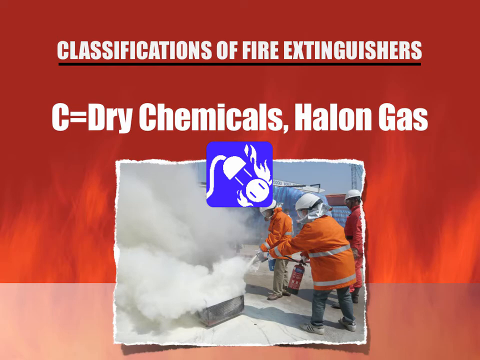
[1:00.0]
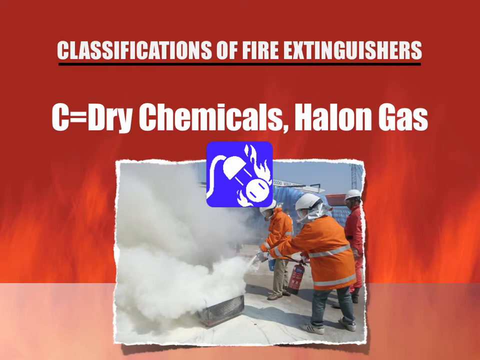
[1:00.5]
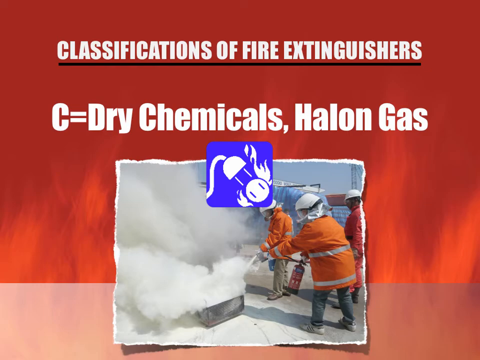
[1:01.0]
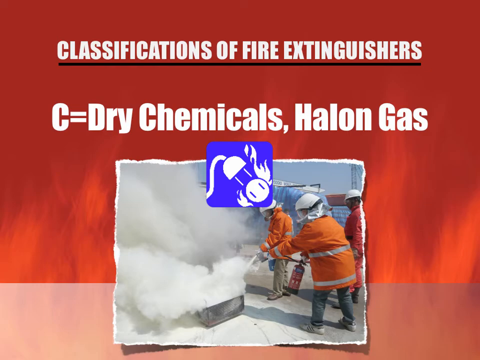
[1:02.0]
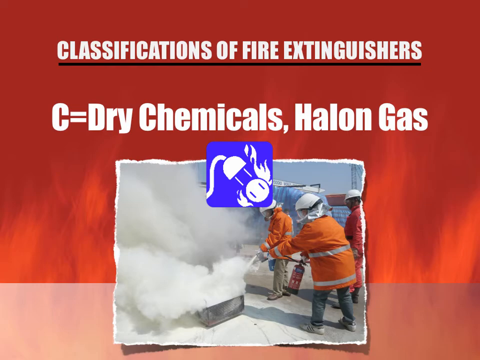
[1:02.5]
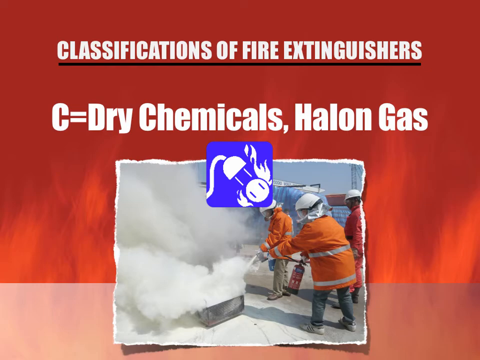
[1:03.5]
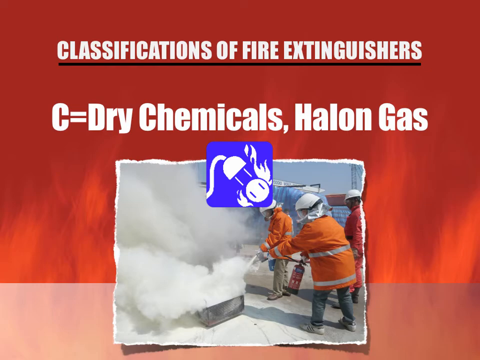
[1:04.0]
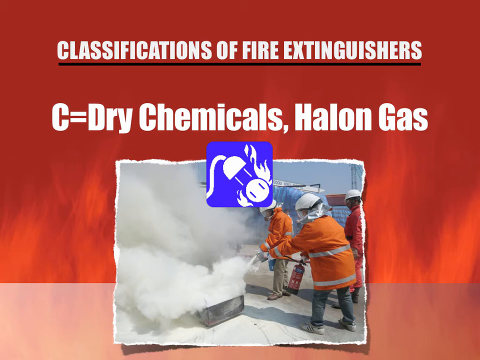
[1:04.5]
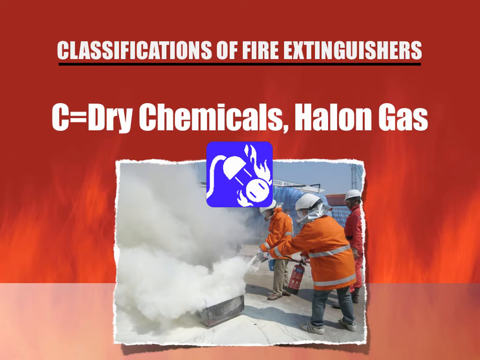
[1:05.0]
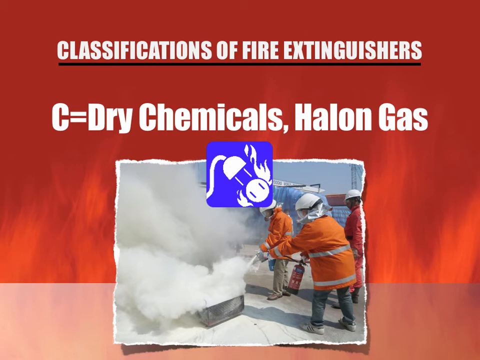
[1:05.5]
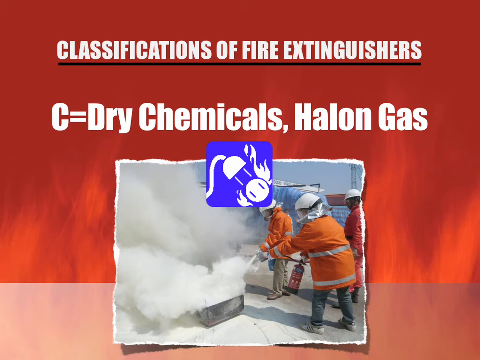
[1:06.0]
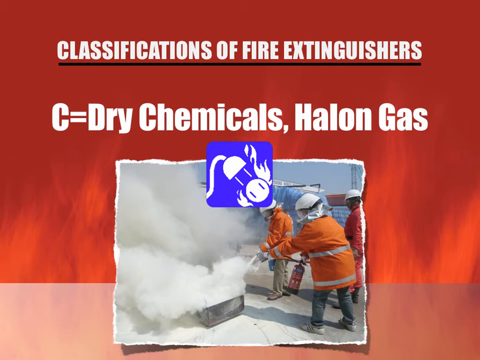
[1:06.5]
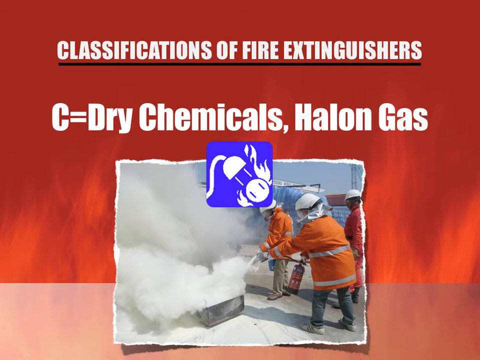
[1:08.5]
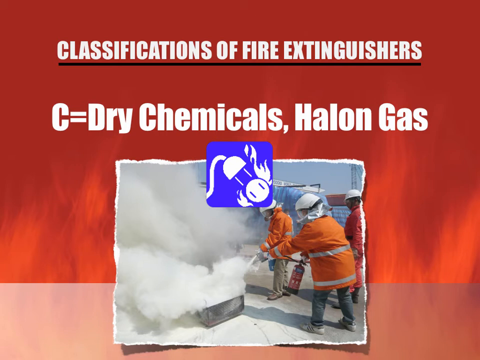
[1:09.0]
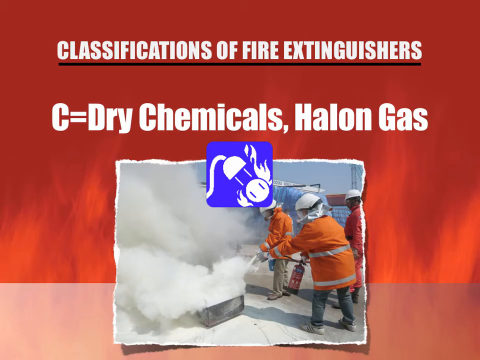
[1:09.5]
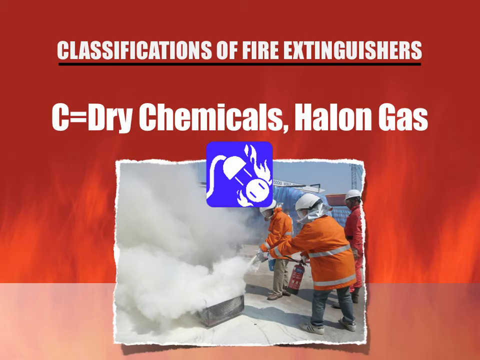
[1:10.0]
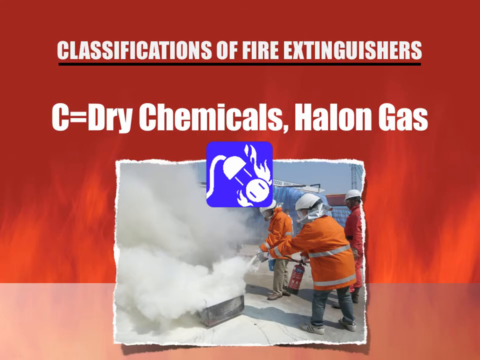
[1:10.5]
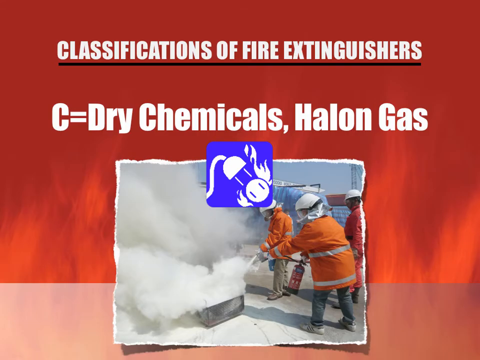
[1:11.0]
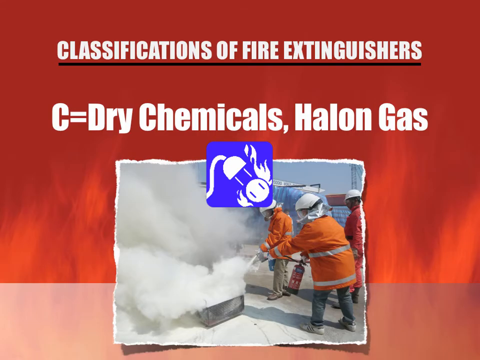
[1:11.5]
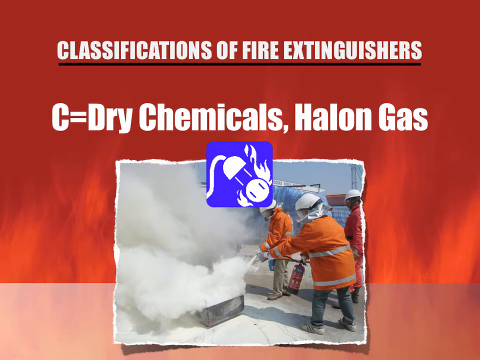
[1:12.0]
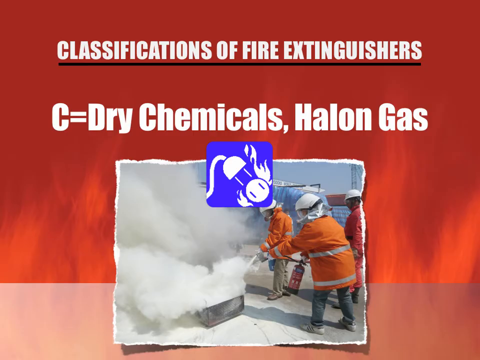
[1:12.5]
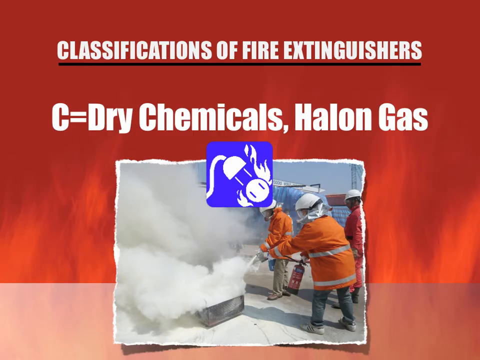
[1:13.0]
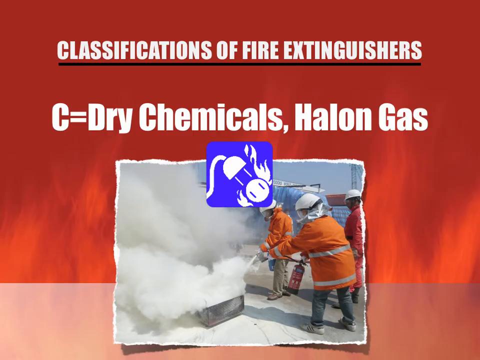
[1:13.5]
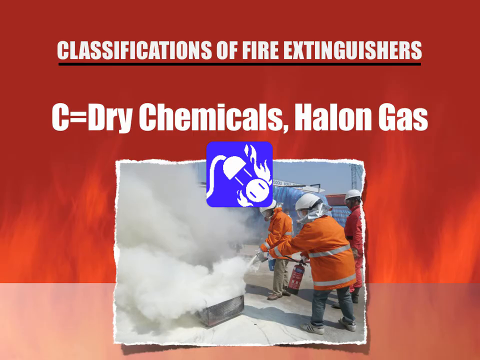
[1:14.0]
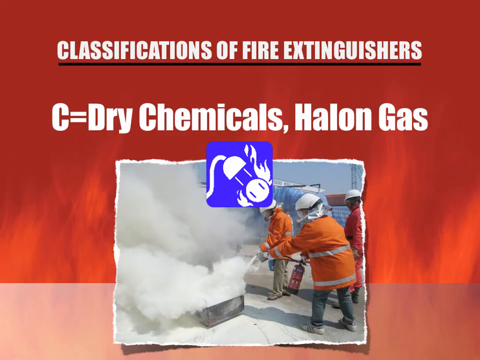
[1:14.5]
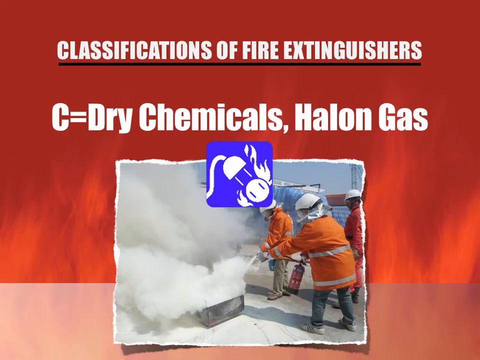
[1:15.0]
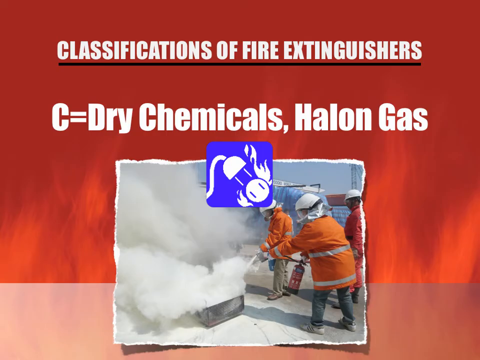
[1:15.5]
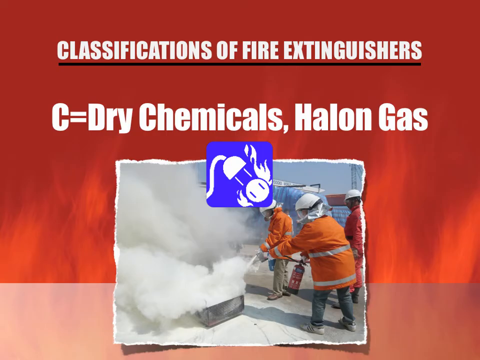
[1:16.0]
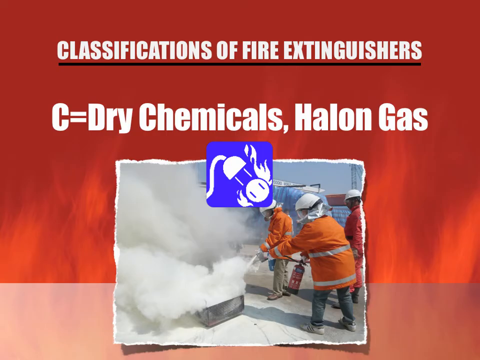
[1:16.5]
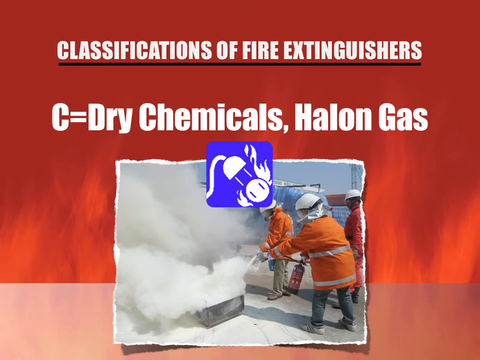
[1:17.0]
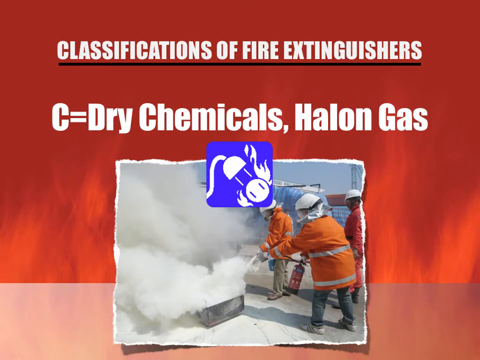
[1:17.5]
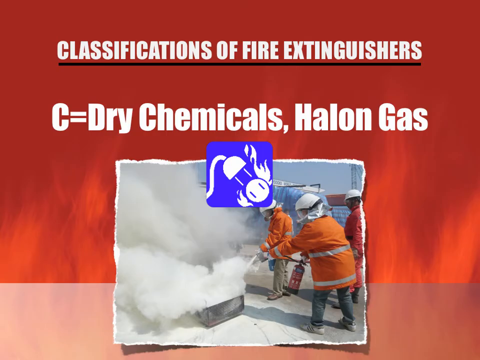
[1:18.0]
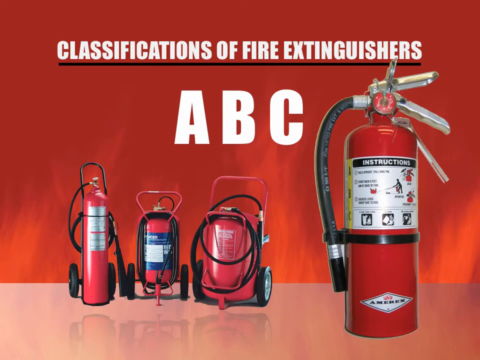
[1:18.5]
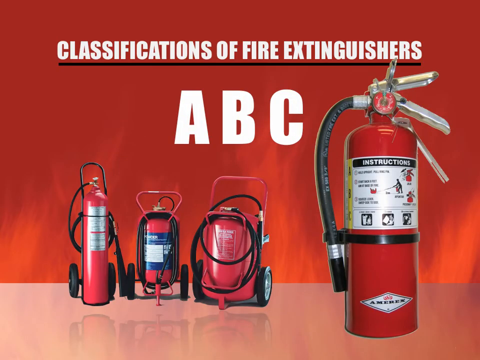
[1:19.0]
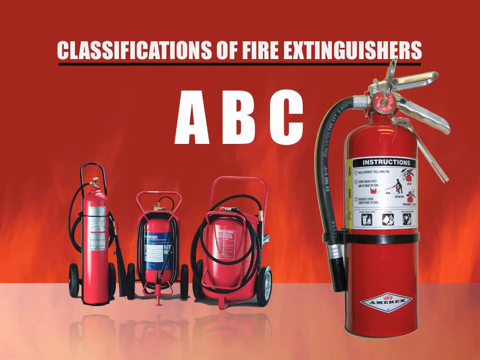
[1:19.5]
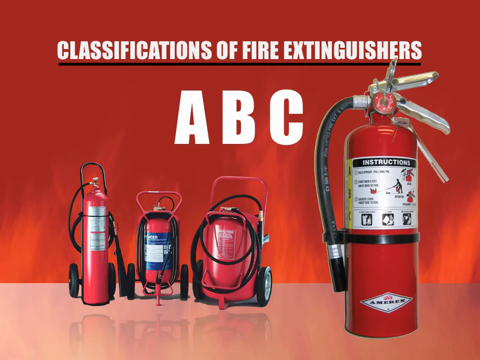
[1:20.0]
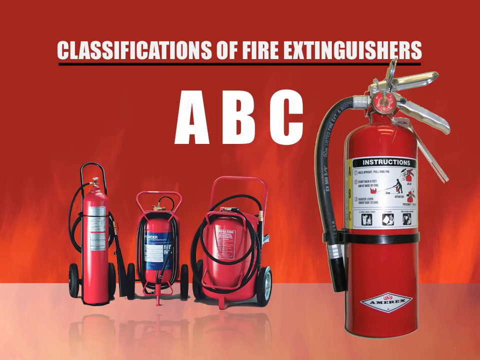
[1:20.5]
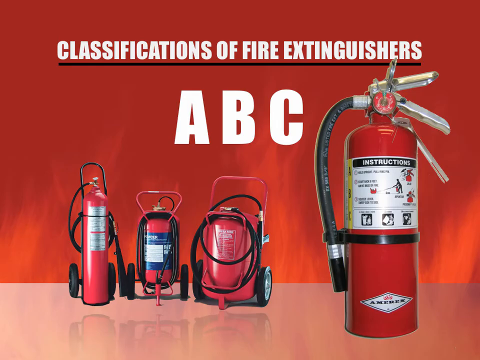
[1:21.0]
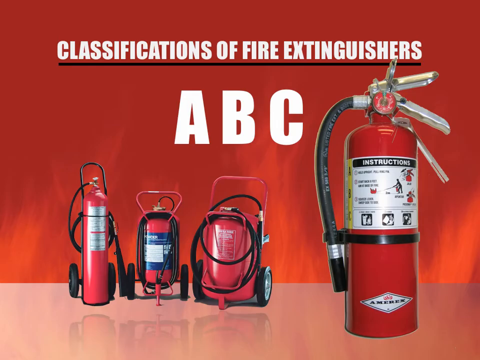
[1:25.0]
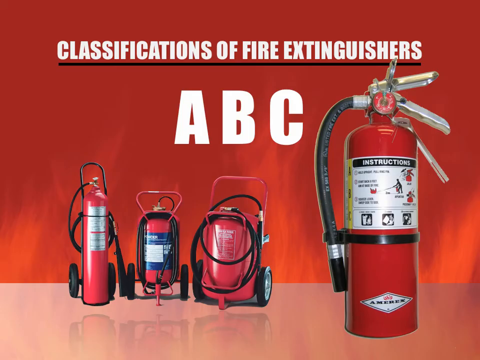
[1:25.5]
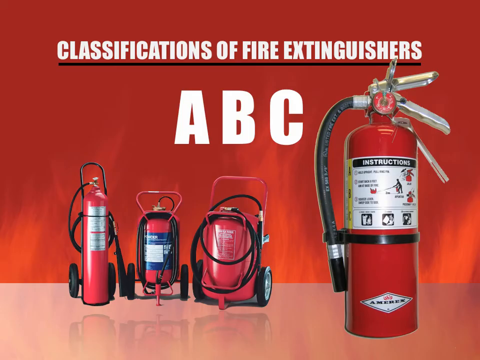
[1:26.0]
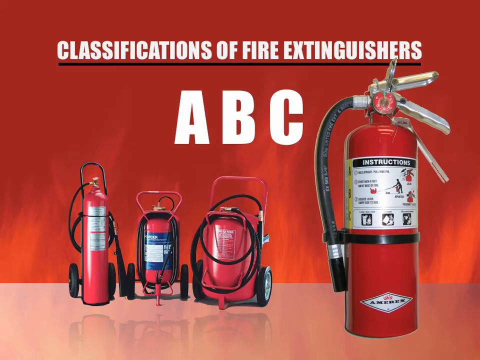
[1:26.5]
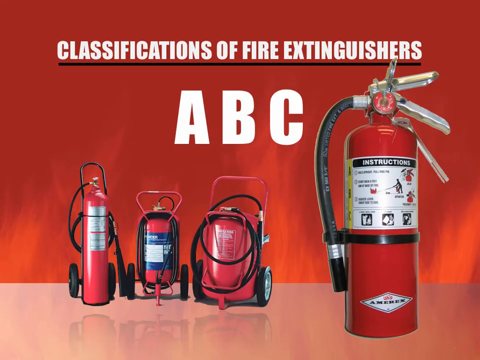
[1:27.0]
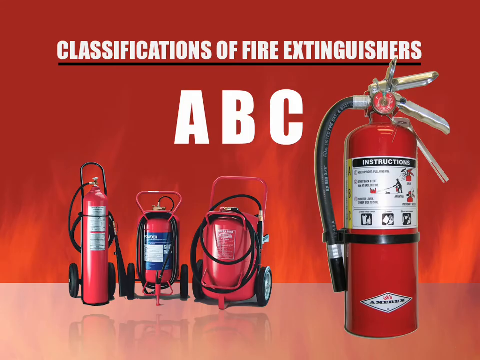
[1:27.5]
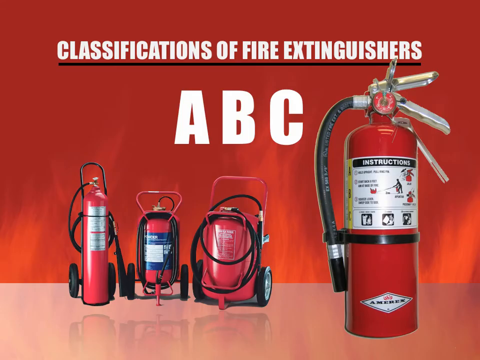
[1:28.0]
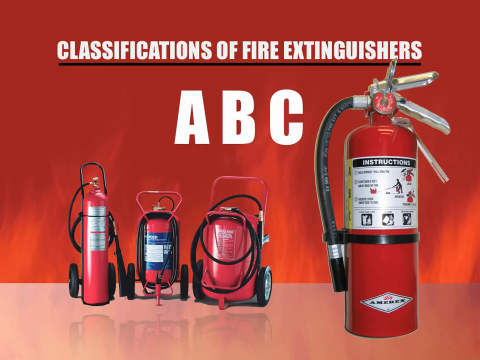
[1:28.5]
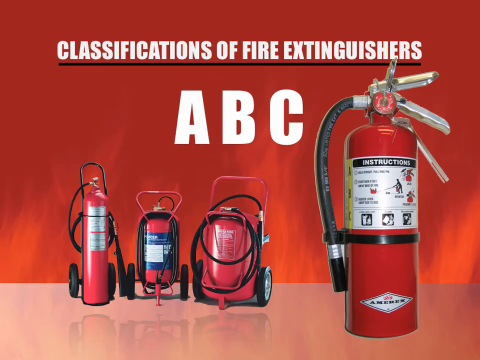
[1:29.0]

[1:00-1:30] Ordinary combustibles are listed: paper, wood, charcoal, cardboard and plastics. Gasoline, oil and grease are also shown. A man is trying to stop a fire with a fire extinguisher. An electrical fire is being stopped, with wiring, circuit and outlet listed under electrical fire. Dry chemical and halonic gases are also shown.